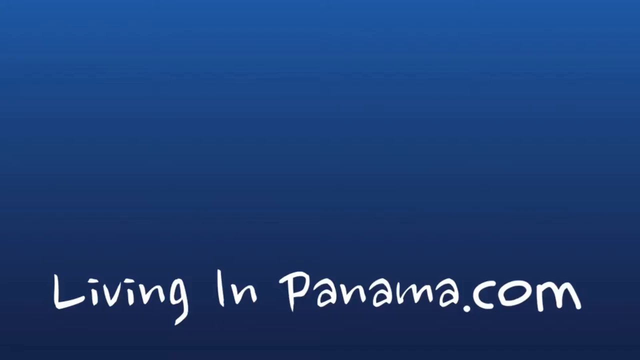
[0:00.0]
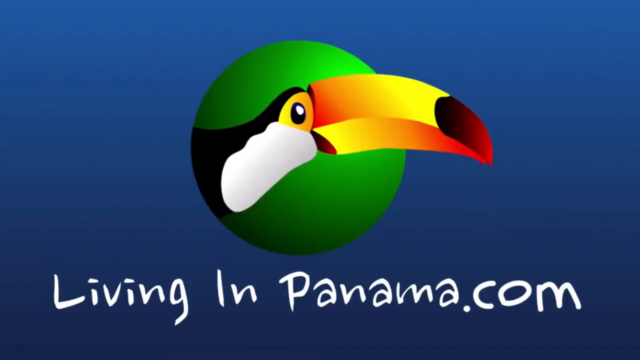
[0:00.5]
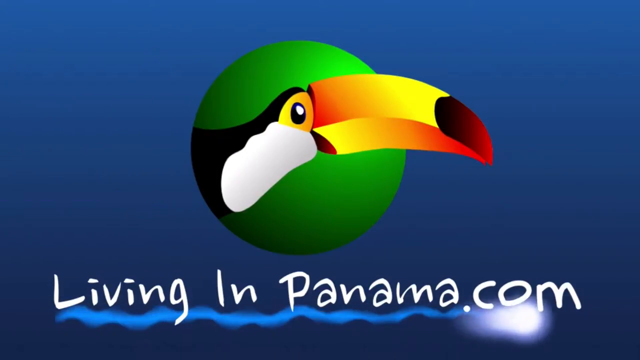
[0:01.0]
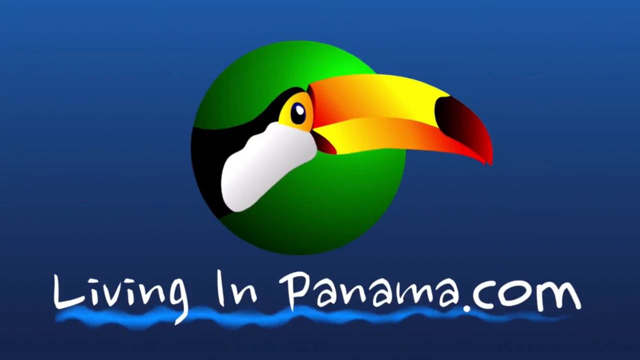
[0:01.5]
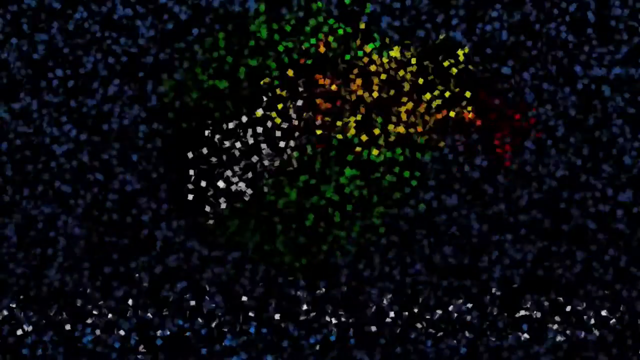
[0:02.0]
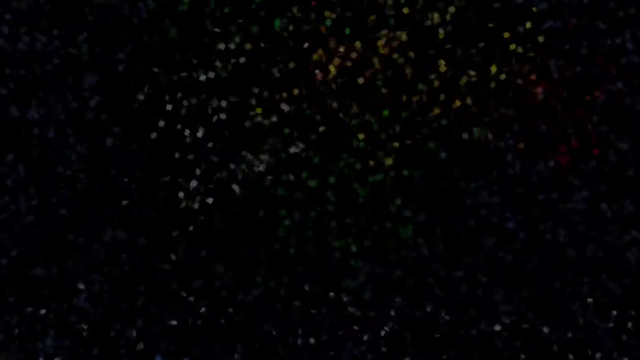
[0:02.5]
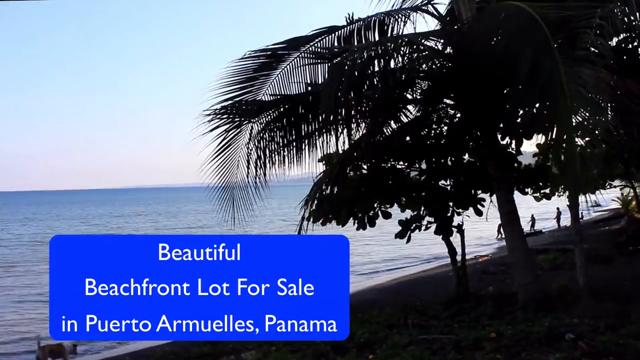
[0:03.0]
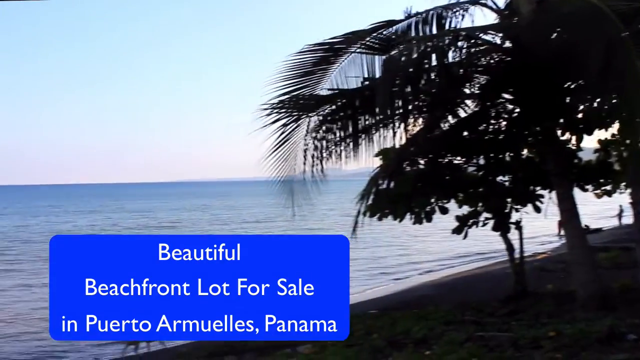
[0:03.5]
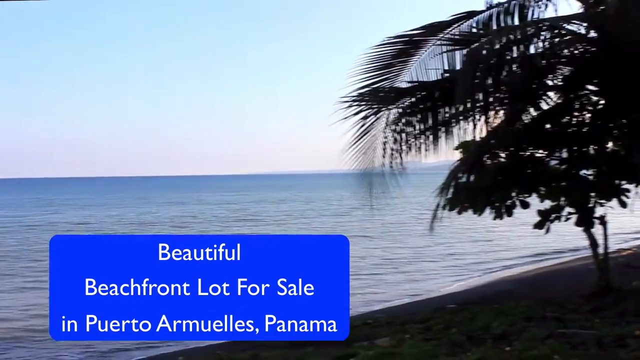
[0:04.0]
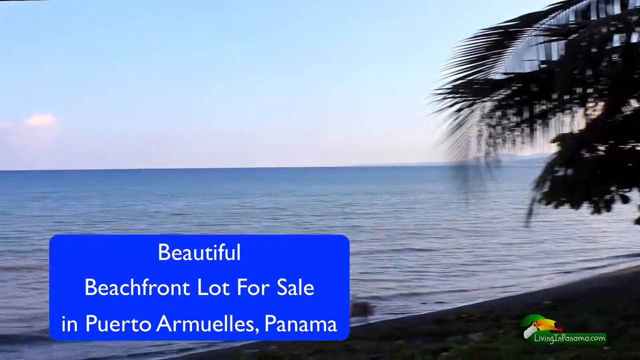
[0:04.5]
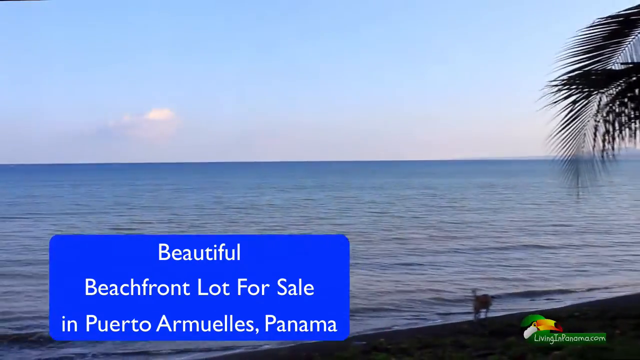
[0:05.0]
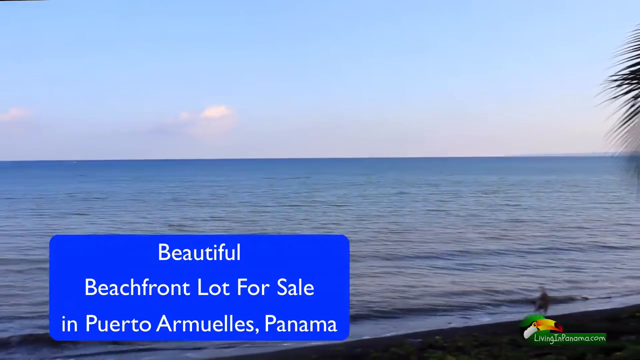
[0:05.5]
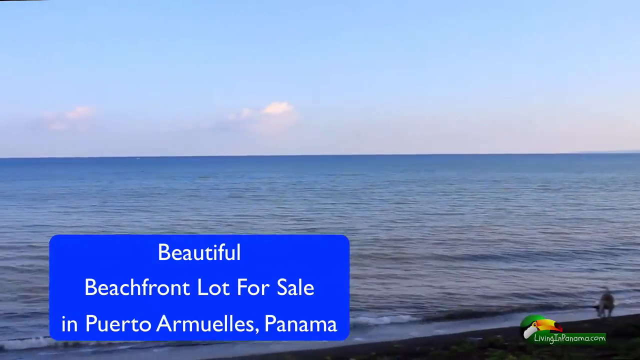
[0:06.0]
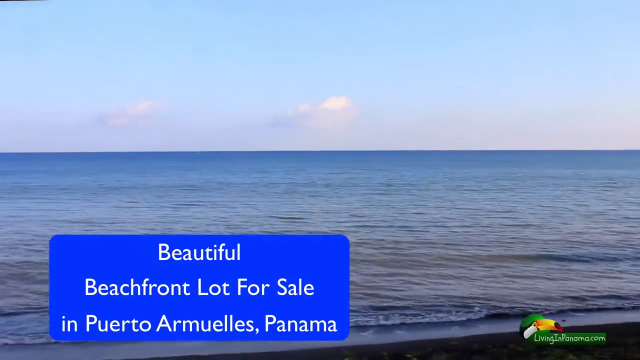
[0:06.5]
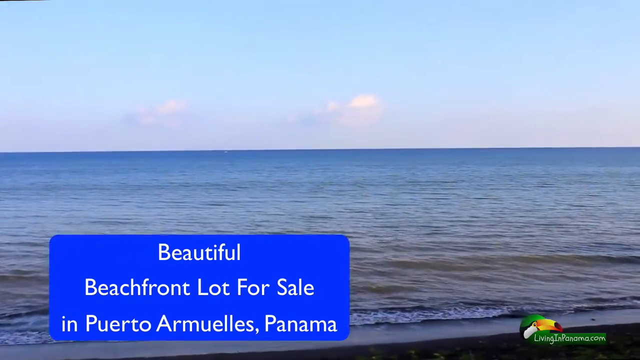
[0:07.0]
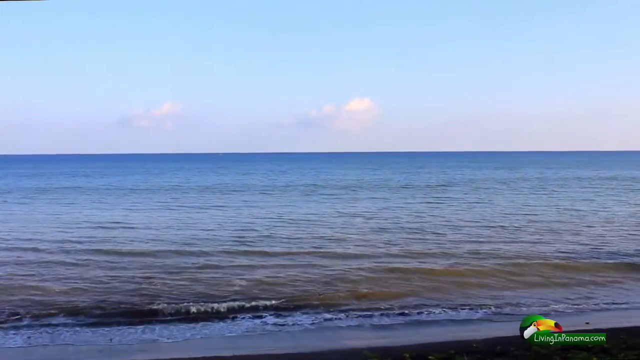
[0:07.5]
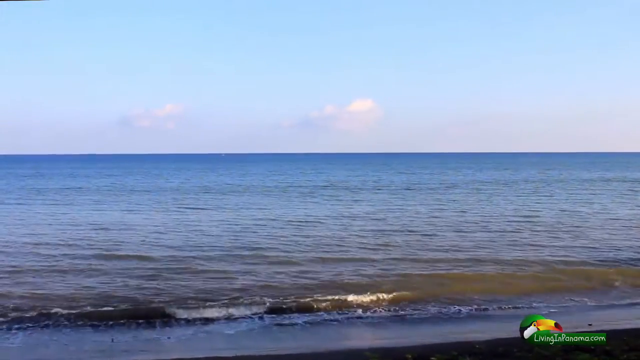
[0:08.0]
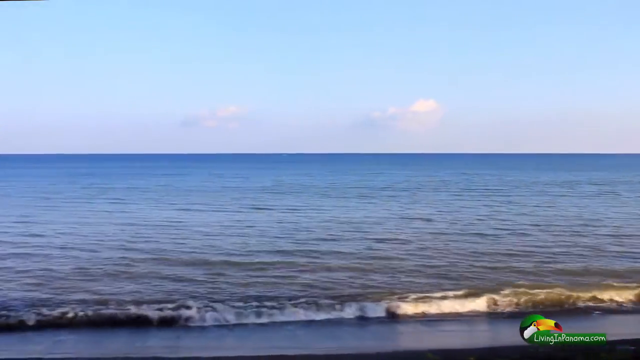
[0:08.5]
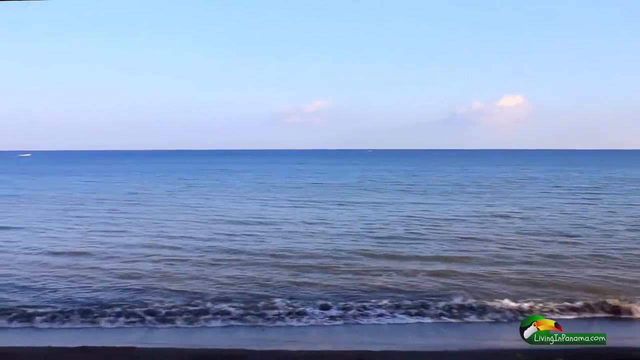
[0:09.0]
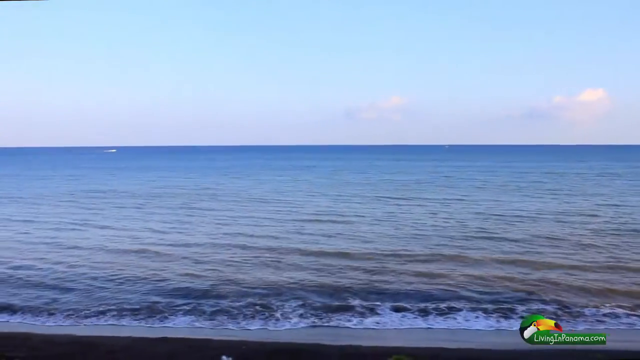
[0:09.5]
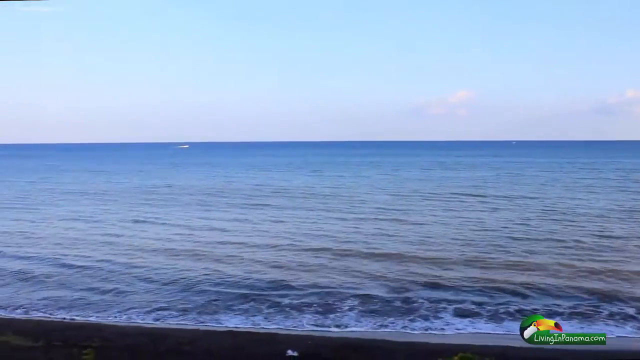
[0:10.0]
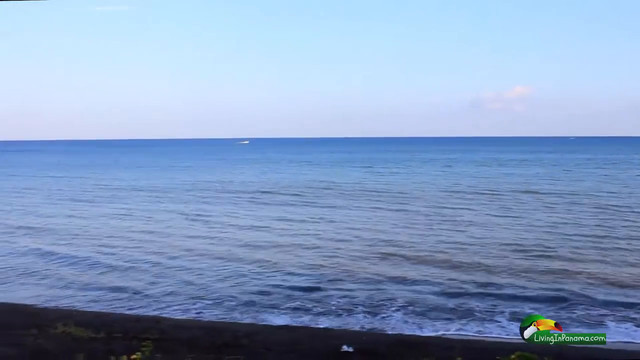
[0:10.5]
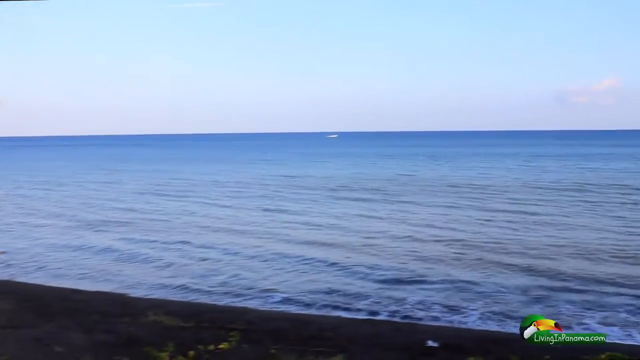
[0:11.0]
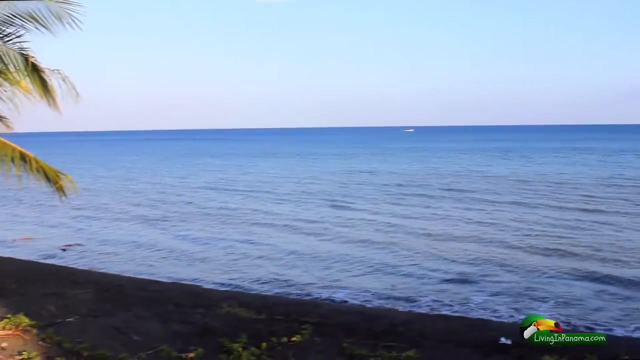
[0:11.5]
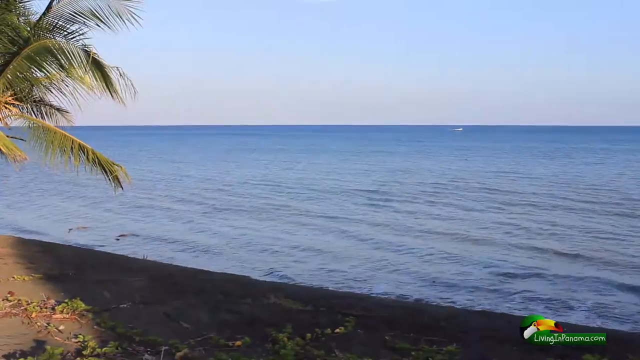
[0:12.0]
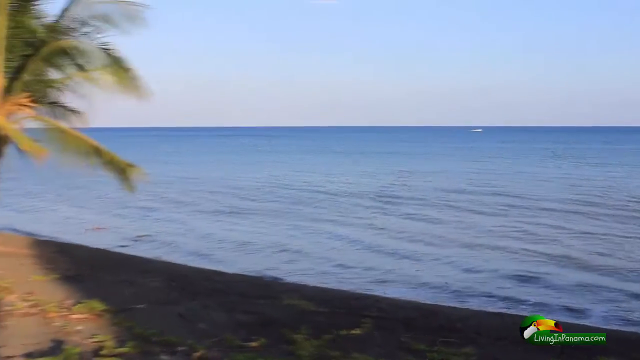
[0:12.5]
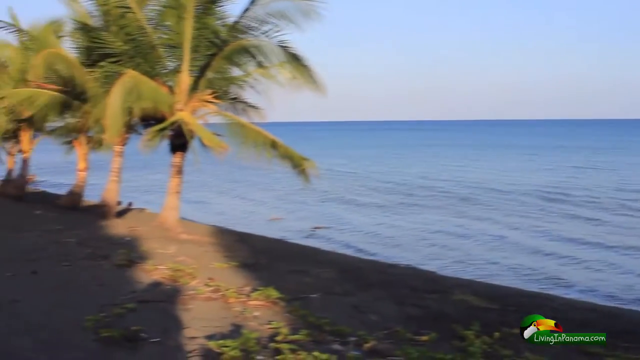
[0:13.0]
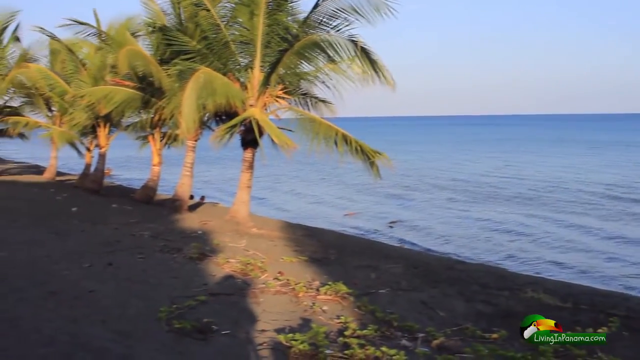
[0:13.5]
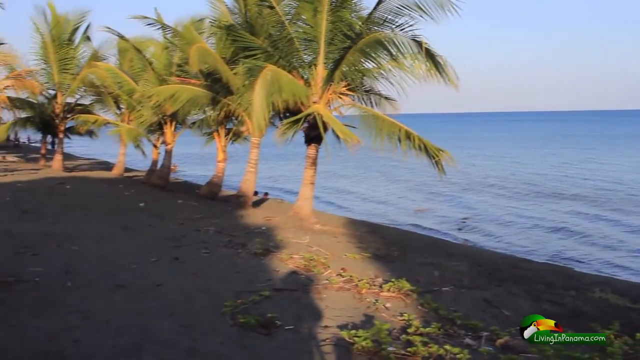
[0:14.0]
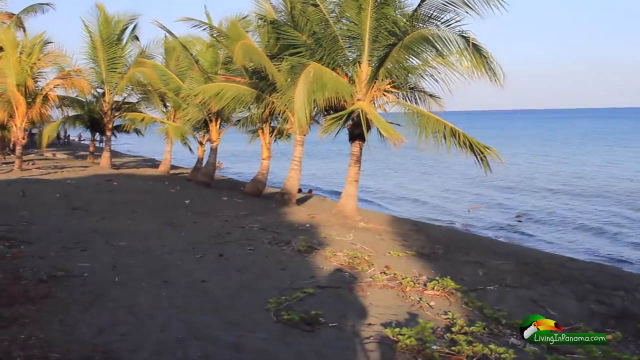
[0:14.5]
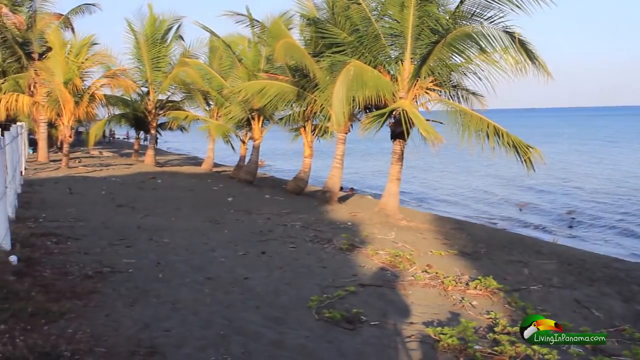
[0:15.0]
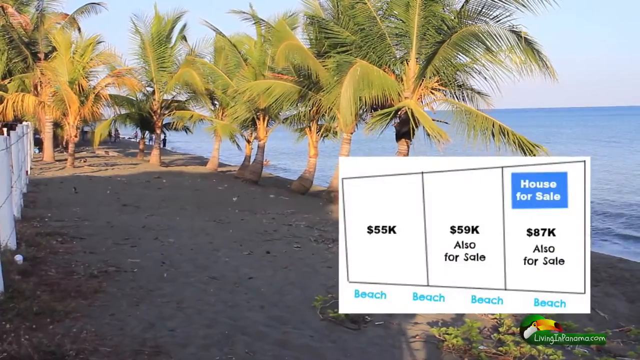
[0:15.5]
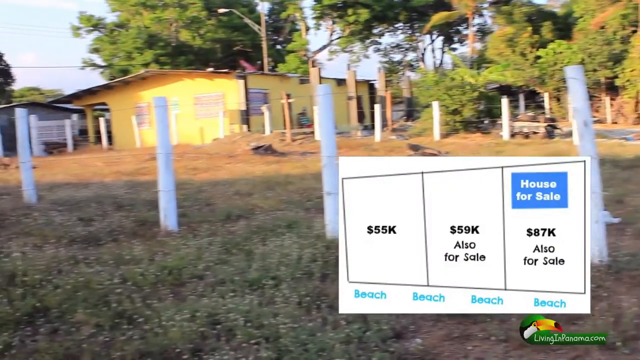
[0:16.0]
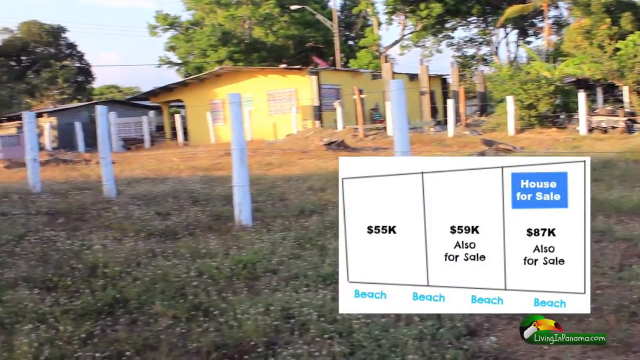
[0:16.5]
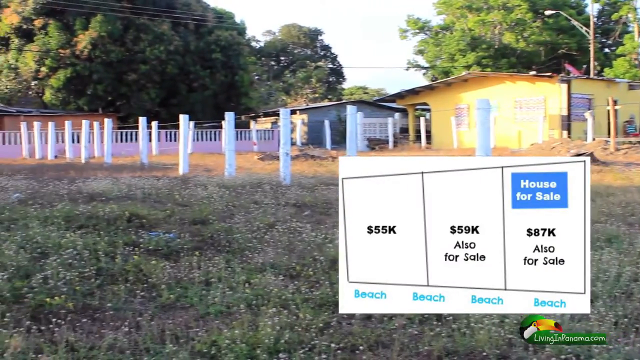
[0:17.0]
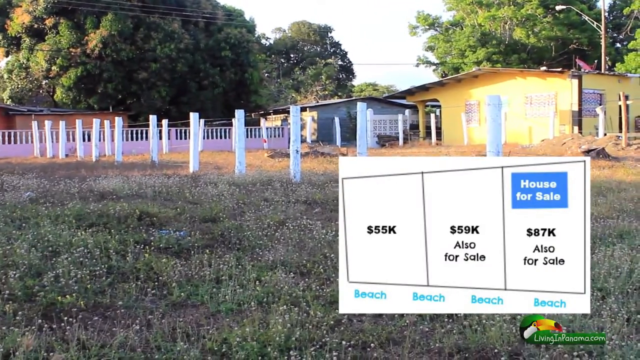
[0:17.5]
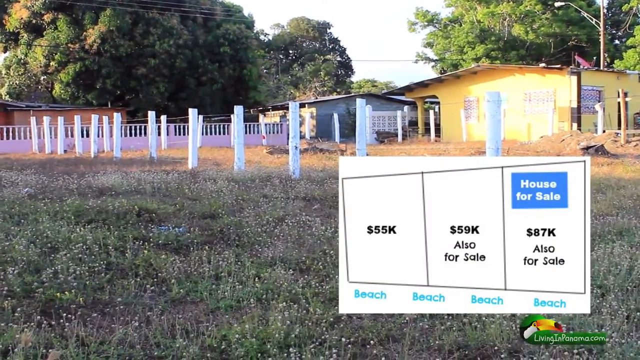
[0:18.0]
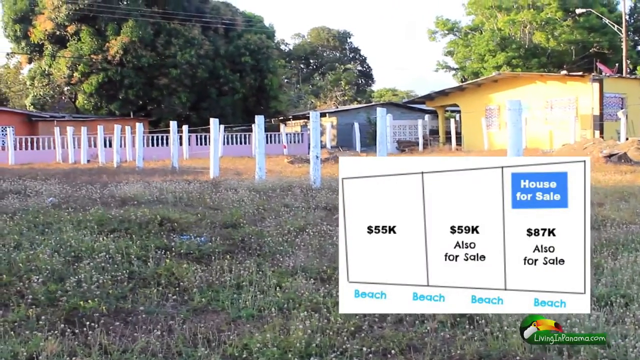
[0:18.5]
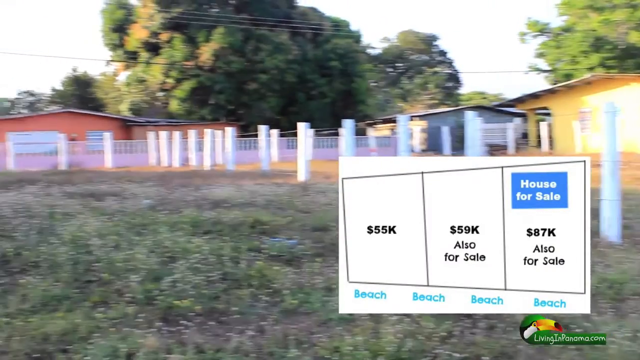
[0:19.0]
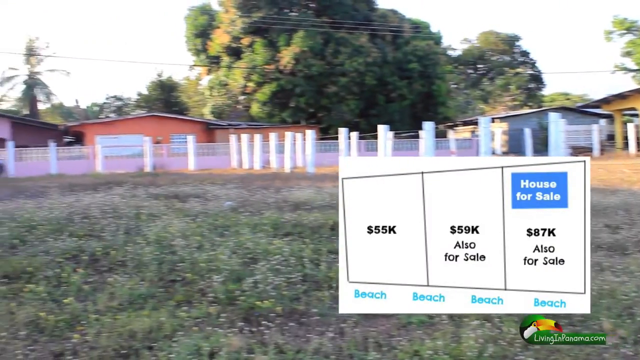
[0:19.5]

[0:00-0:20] The video opens on a blue screen with the words "livinginpanama.com" written at the bottom. An image shoots in from the left-hand side of the screen: a green circle with a toucan over it that has a bright orange beak. The screen goes black with something like sparkles flying around, then cuts to a beach scene with a palm tree, a bright blue sky, sand at the bottom and the sea, and a blue rectangle that reads "beautiful beach front lot for sale in Porto Mulas, Panama". The writing disappears, leaving the ripples of the water, and the view moves to the left-hand side, where there are more palm trees. It then cuts to an image of a one-story yellow house with lots of white posts and a rectangle with details about the house, showing which house is for sale: the one on the right-hand side of the plot.